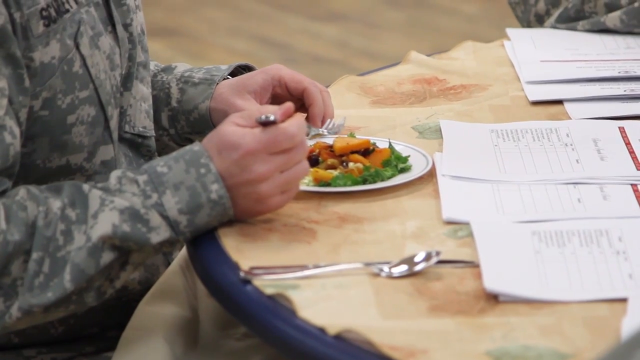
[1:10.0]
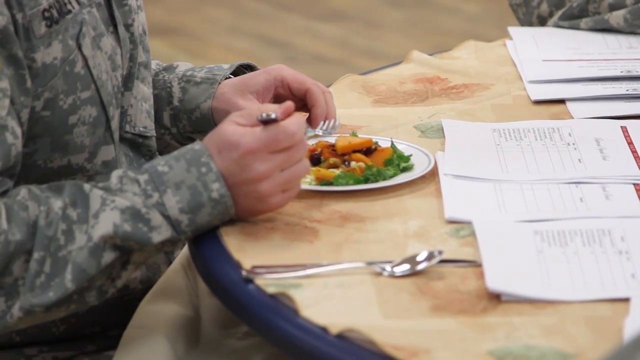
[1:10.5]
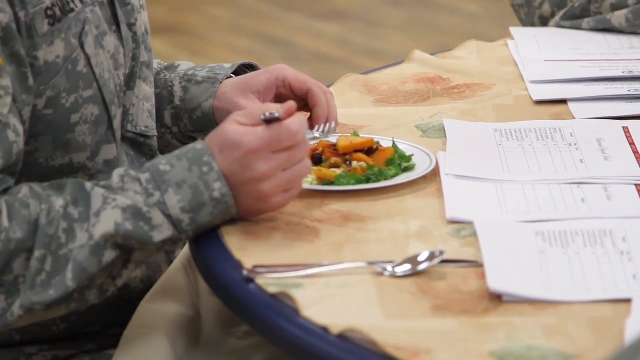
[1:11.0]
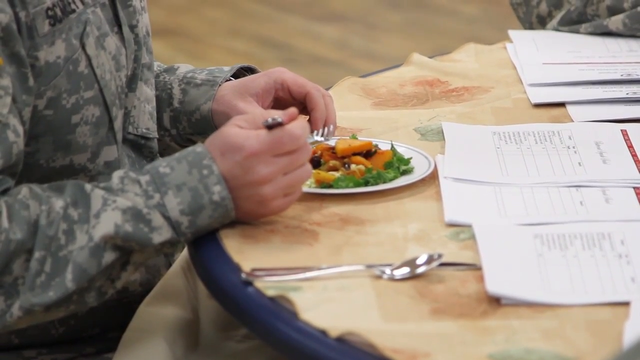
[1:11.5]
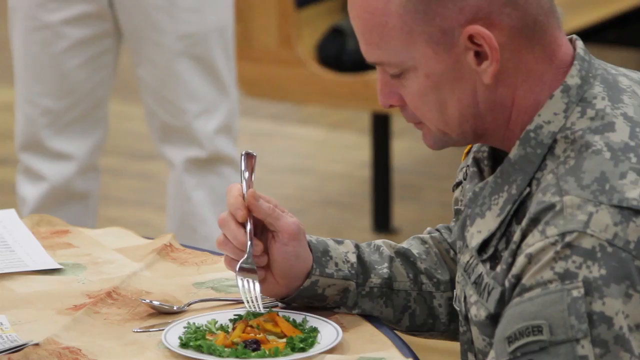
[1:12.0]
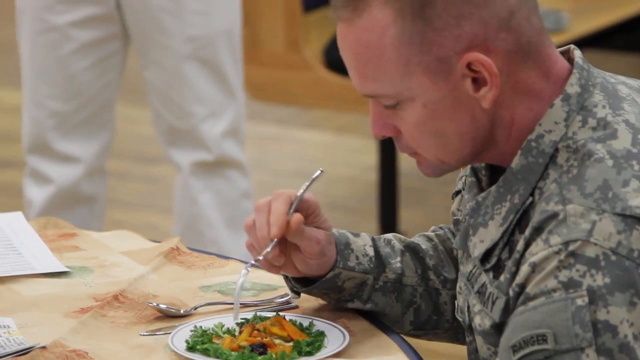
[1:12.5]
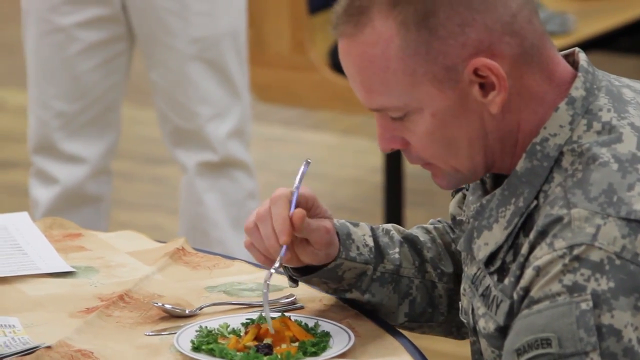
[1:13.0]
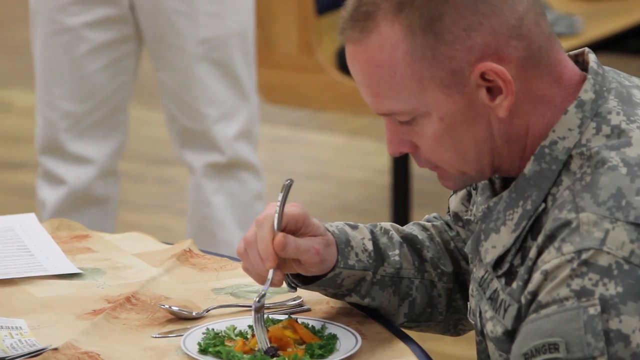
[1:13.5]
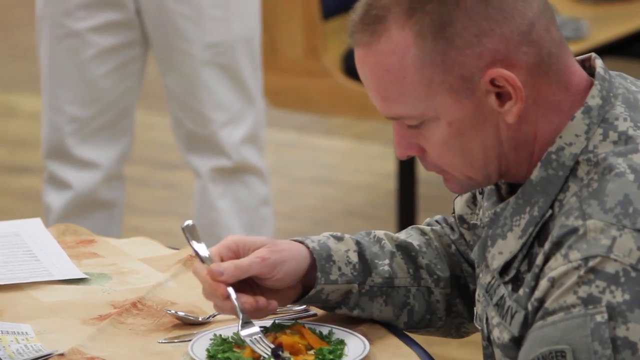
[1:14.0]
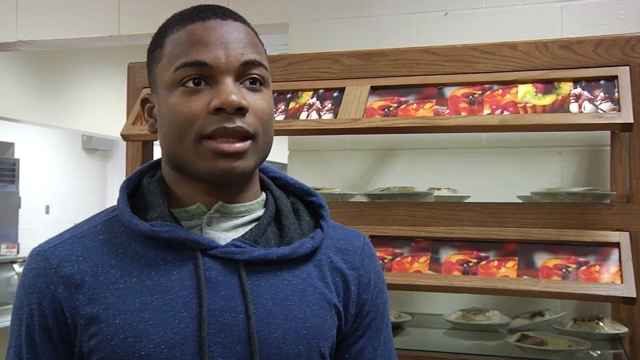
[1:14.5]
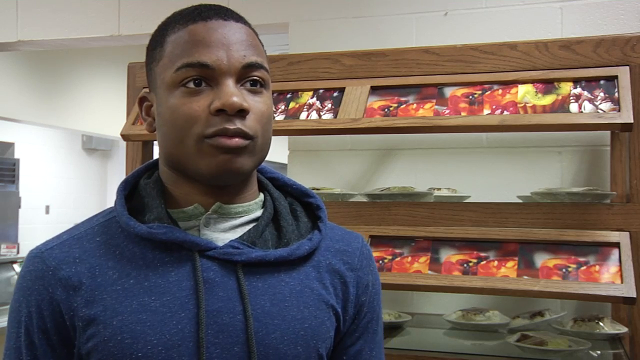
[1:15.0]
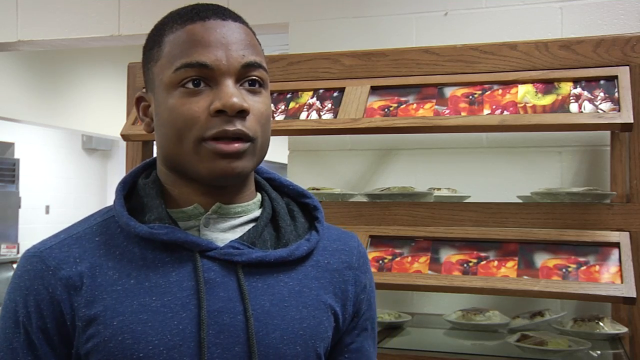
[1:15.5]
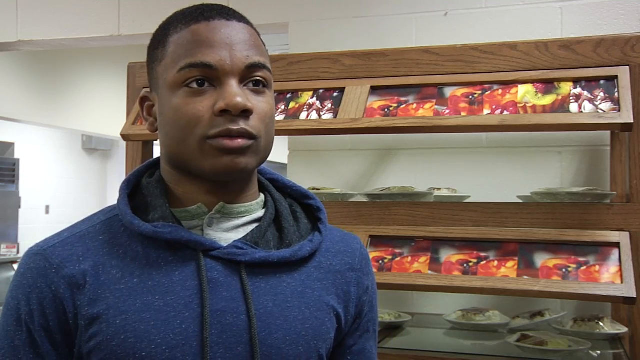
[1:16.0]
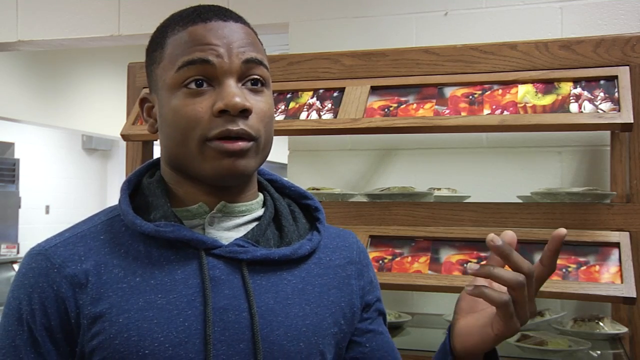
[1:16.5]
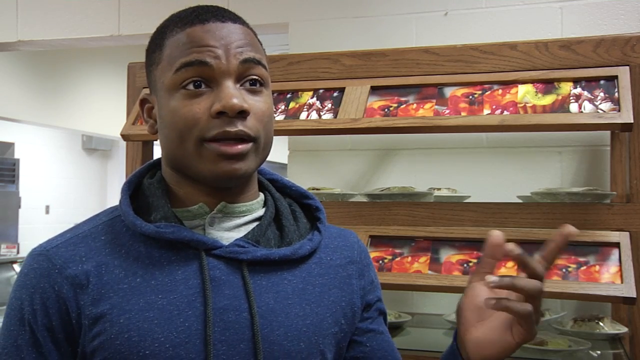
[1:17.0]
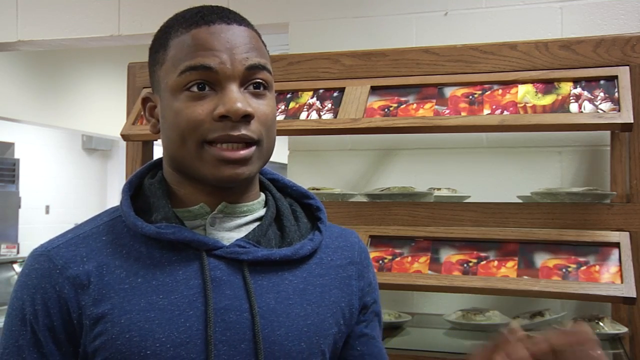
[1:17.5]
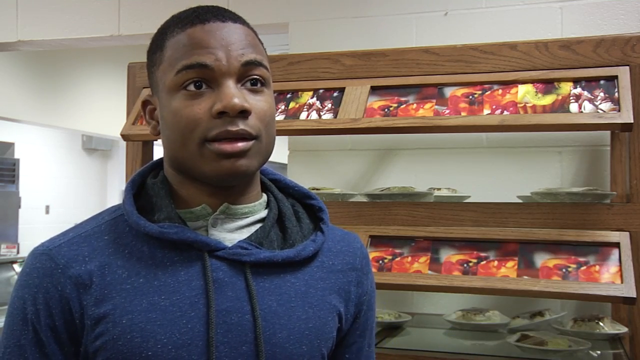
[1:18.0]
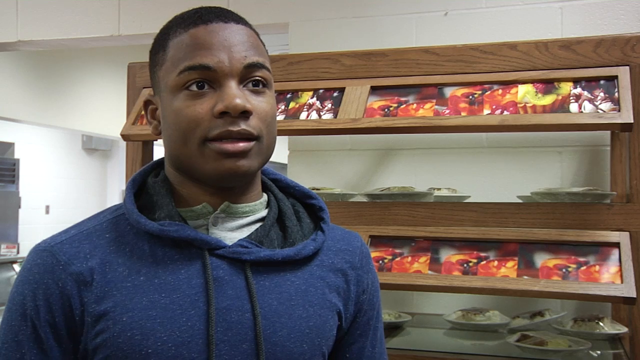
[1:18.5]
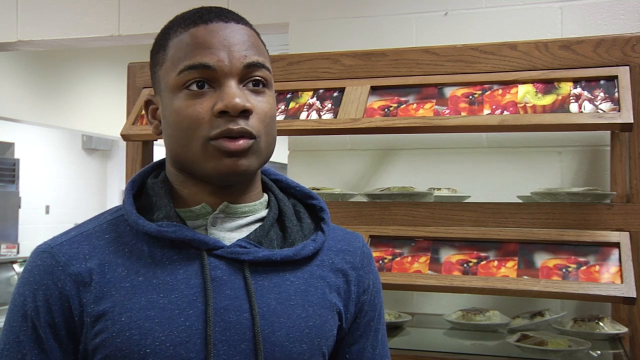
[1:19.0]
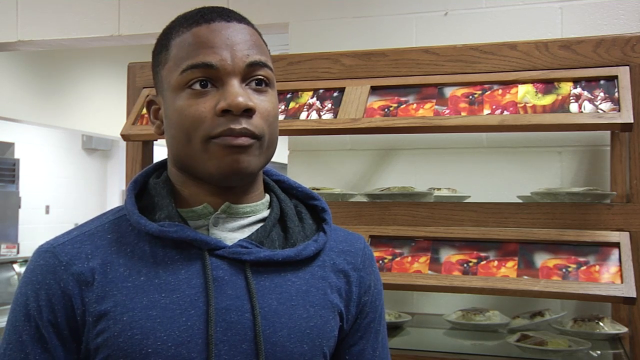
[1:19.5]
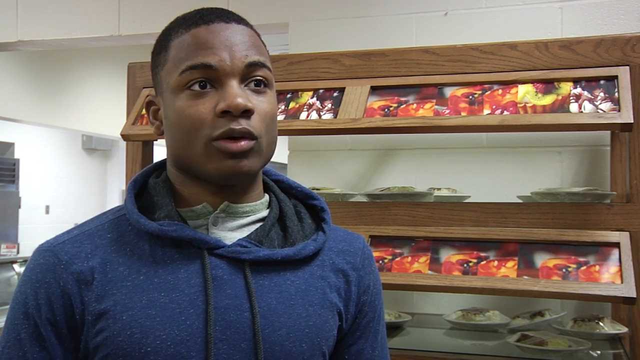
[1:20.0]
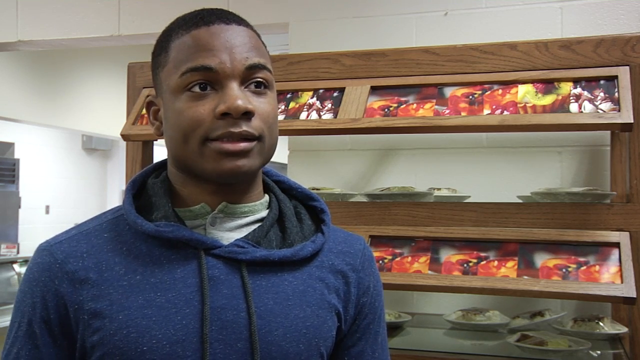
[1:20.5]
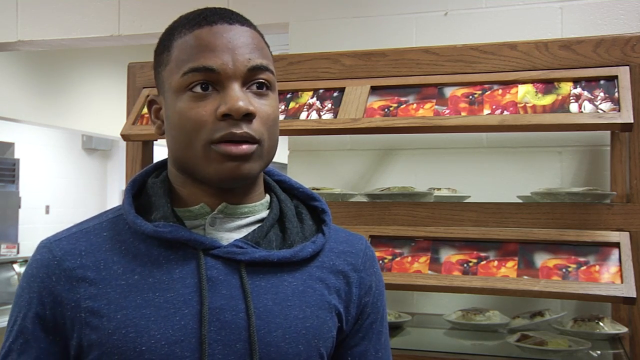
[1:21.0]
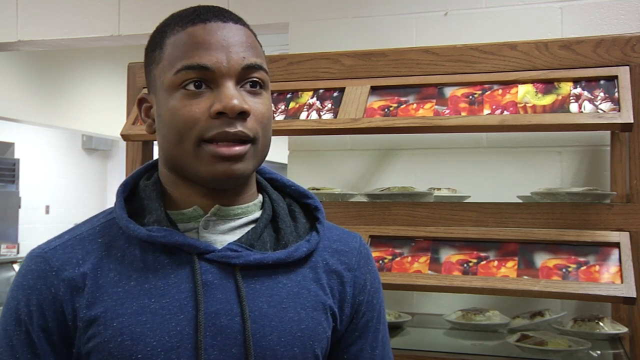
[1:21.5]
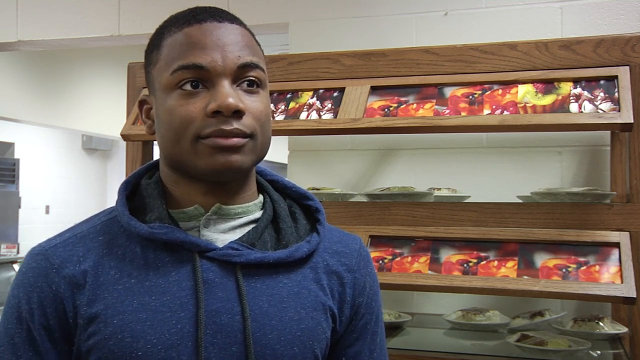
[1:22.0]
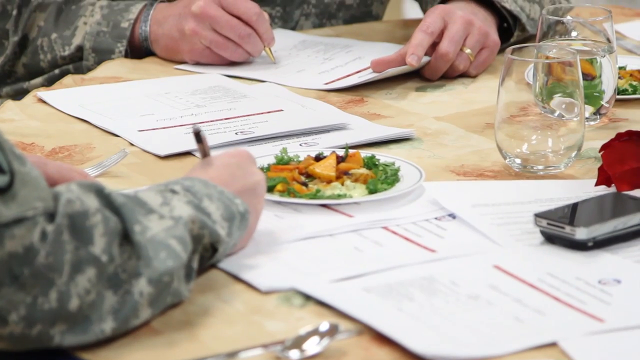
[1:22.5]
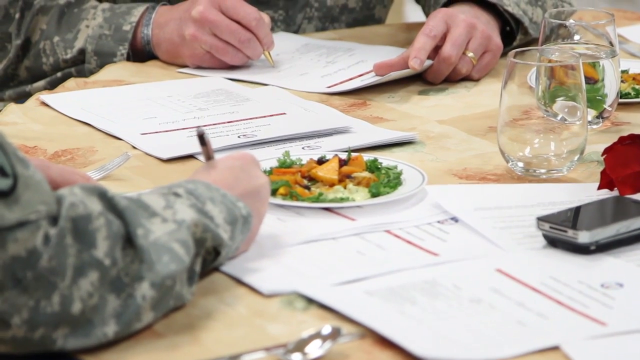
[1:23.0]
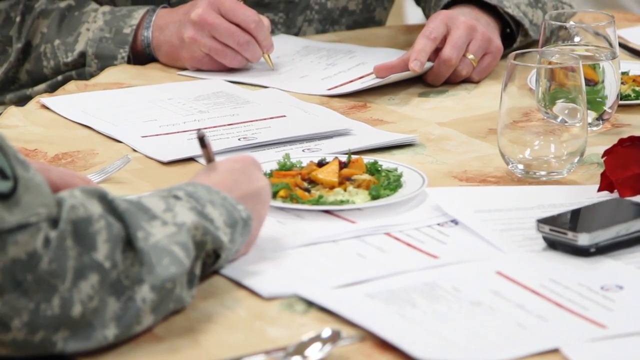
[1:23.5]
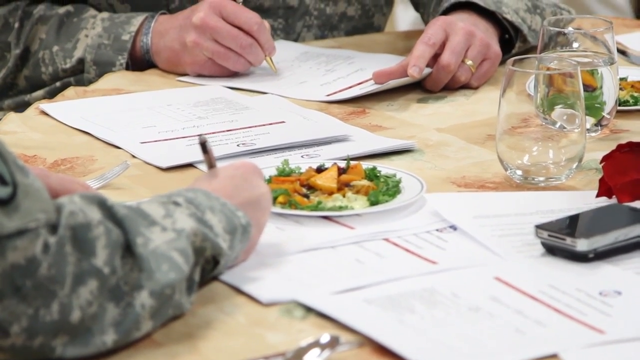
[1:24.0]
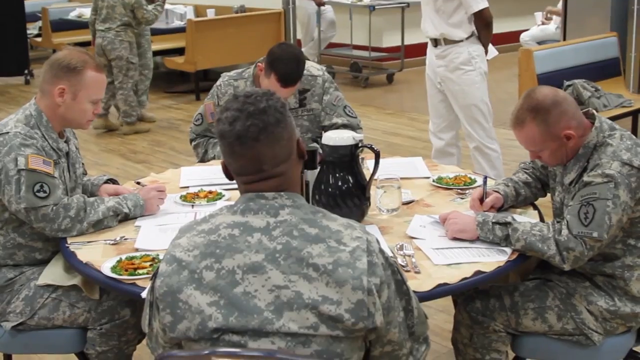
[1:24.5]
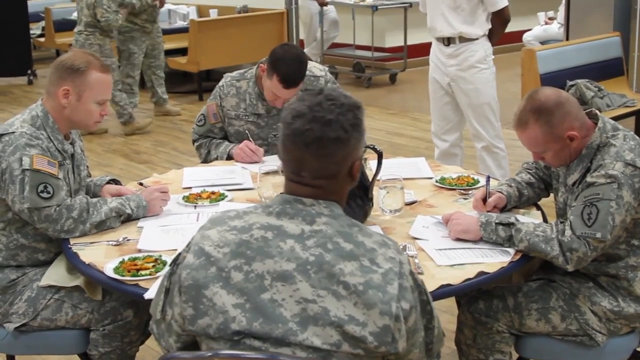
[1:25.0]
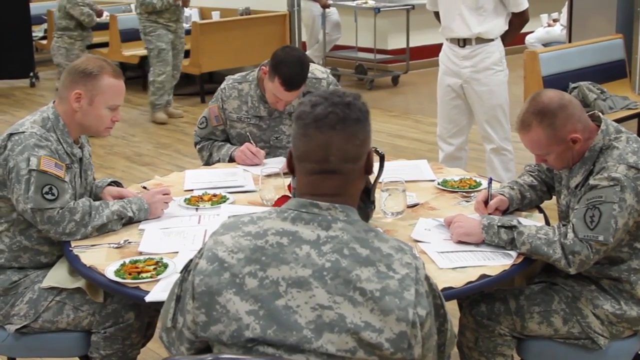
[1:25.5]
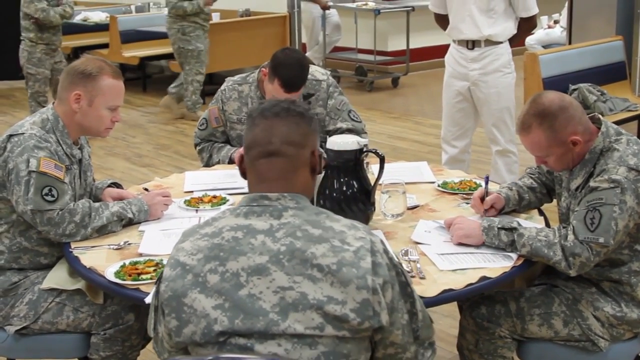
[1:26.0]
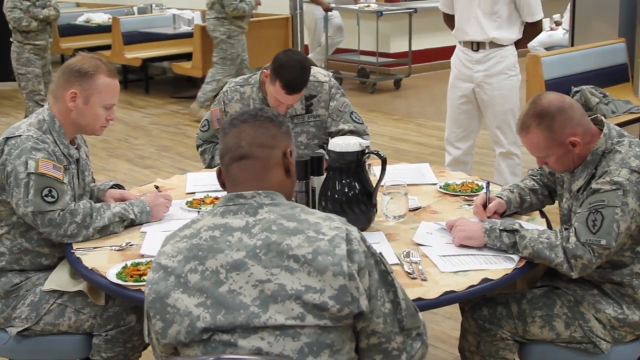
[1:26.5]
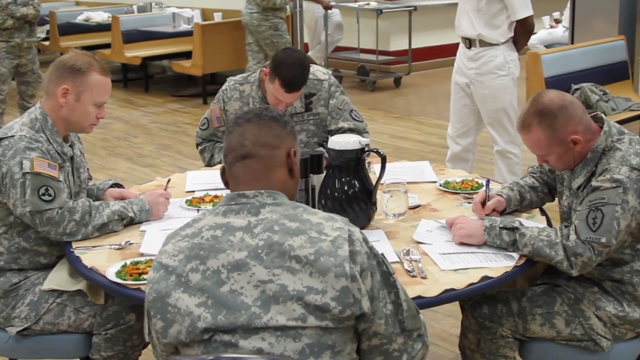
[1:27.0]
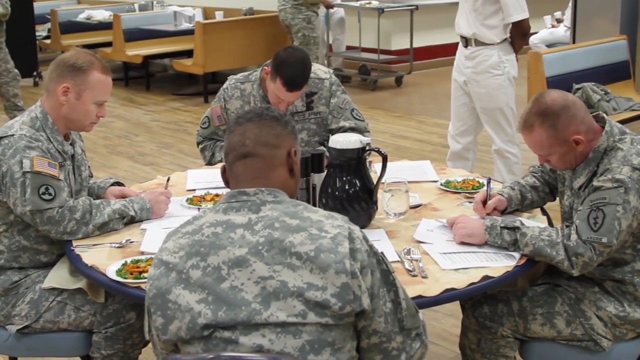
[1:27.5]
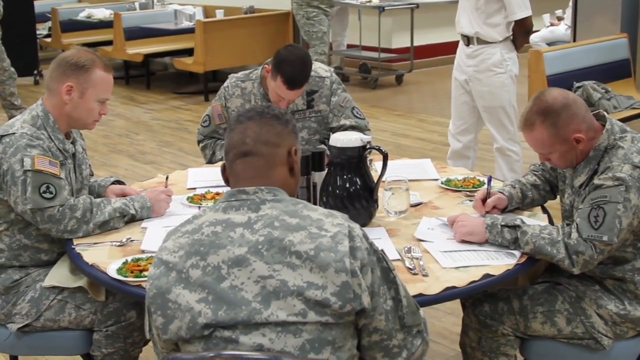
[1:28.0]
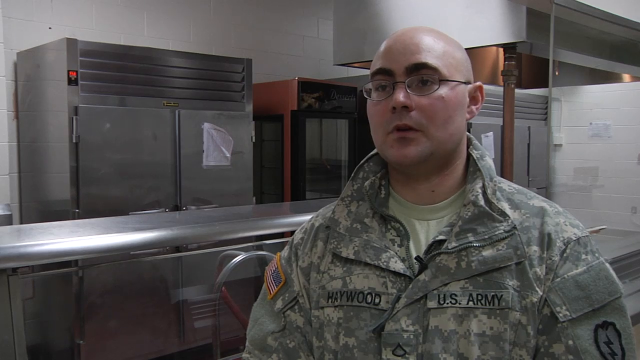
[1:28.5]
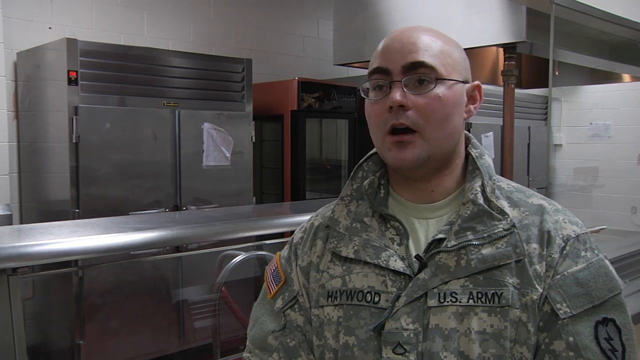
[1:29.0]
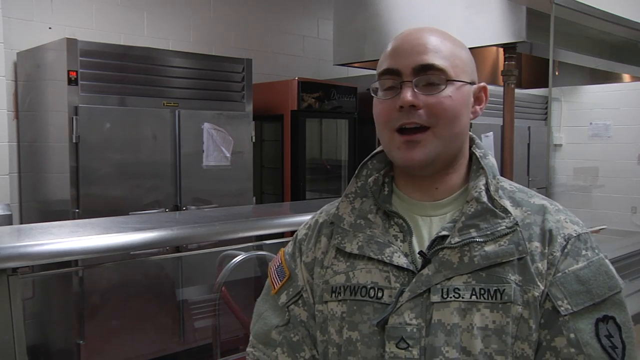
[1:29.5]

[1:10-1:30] A close-up shows one of the plates, which does not look particularly large; it appears to be the plate of squash with coriander on the edge. In another close-up, one of the men spears something with his fork and nods slightly. The next scene shows a young black man wearing a blue hoodie over a t-shirt, looking to the left of the camera as he talks and gesturing a bit with his left hand. Behind him is a serving hatch covered with what looks like plates of food. Back at the army table, the men seem to be filling in a form with pens; they have not eaten much of the food, which suggests it is apparently a tasting. At the end, Hayward is again talking and smiling slightly. He is standing in the kitchen, with industrial-sized fridges behind him; he may be a competitor.